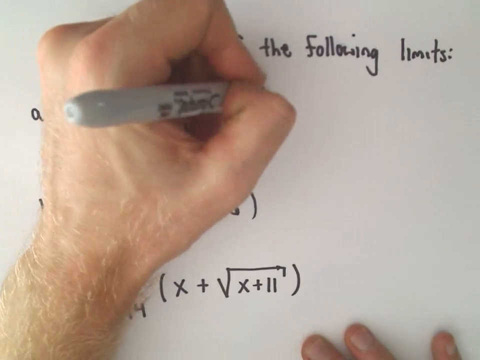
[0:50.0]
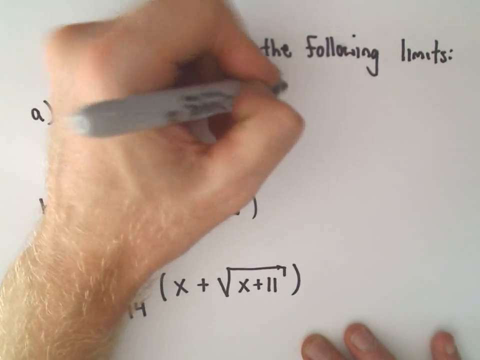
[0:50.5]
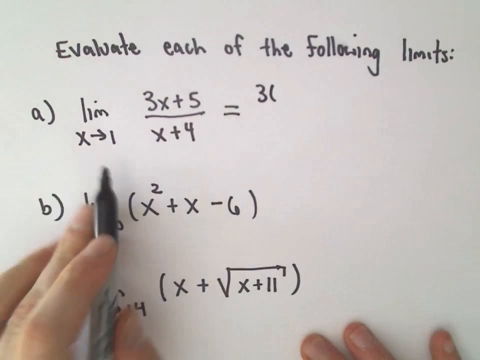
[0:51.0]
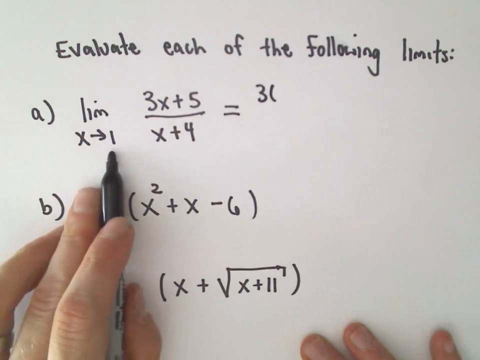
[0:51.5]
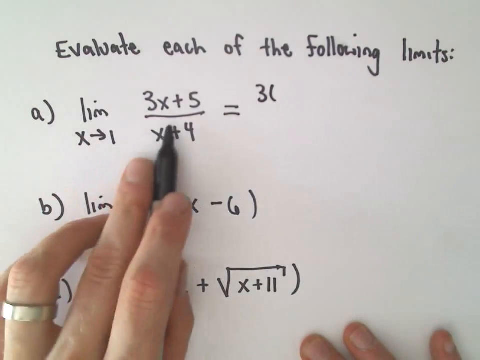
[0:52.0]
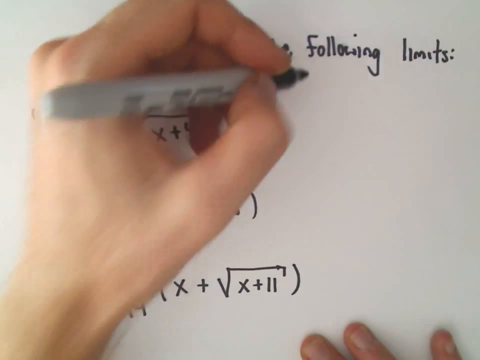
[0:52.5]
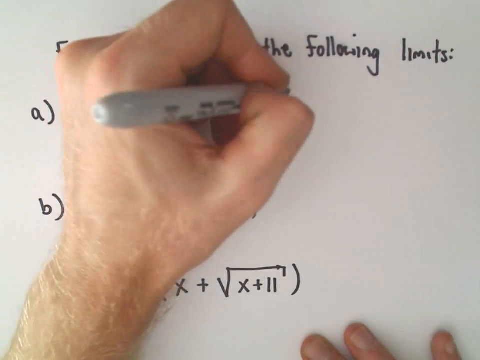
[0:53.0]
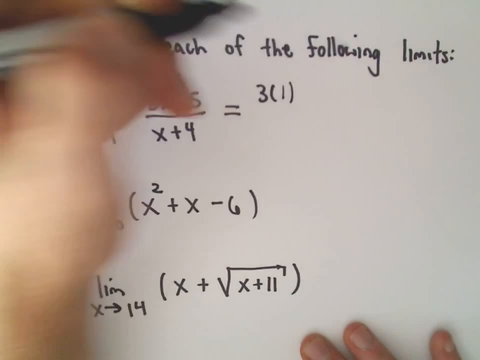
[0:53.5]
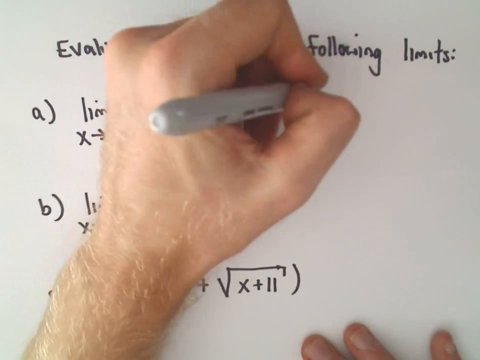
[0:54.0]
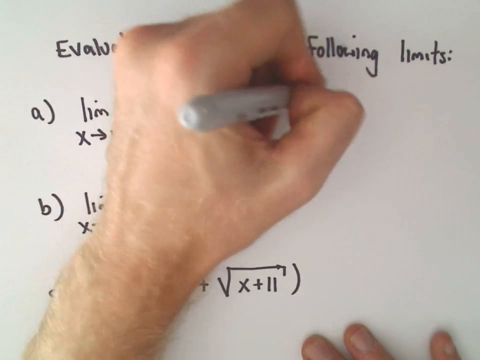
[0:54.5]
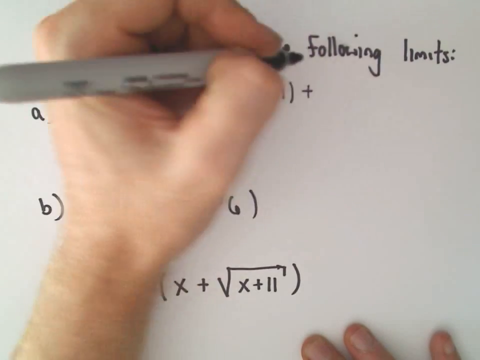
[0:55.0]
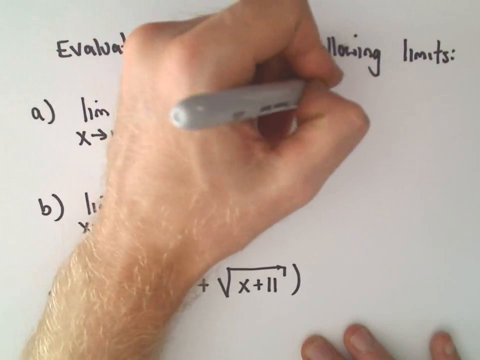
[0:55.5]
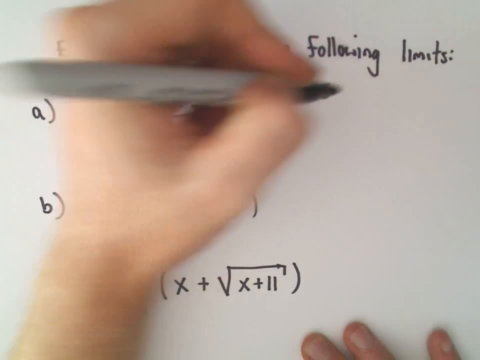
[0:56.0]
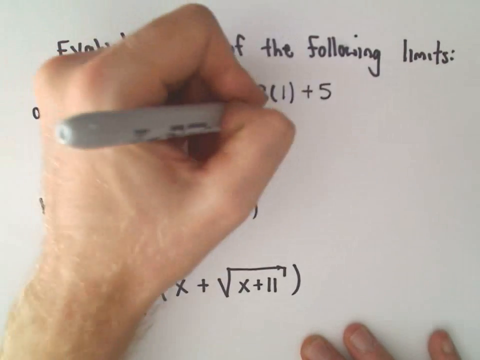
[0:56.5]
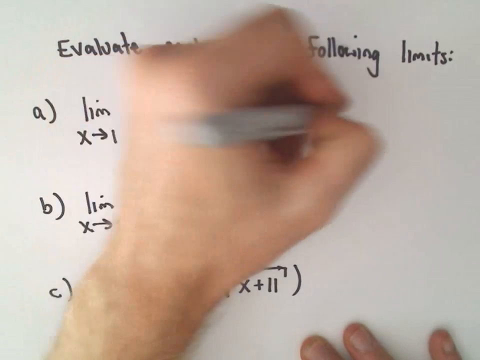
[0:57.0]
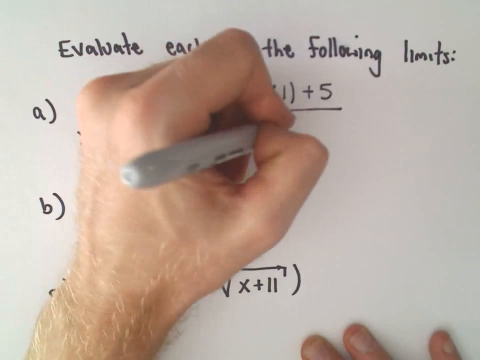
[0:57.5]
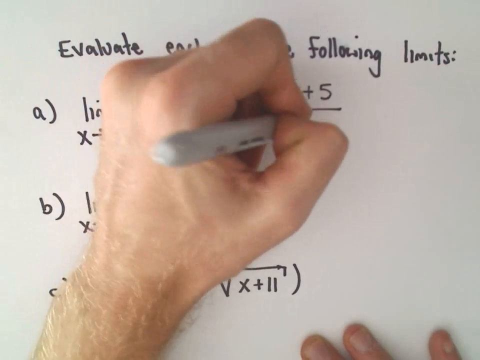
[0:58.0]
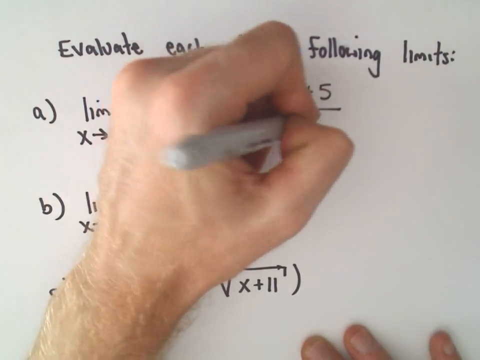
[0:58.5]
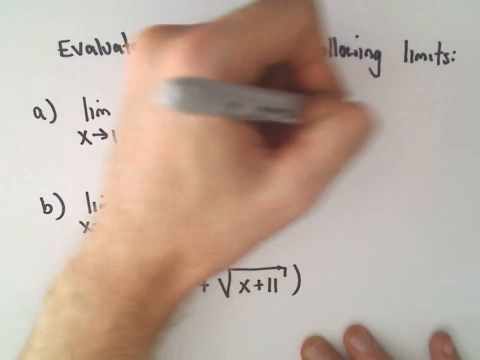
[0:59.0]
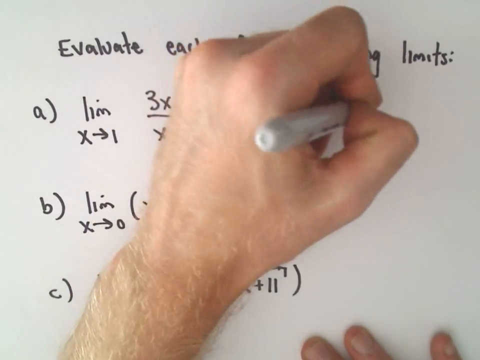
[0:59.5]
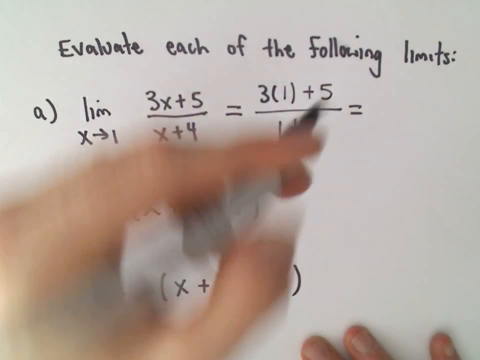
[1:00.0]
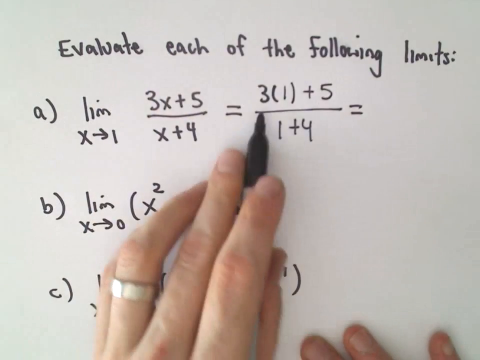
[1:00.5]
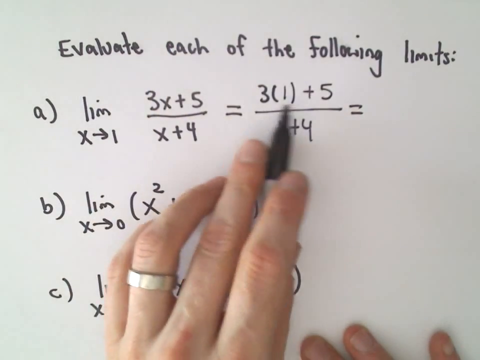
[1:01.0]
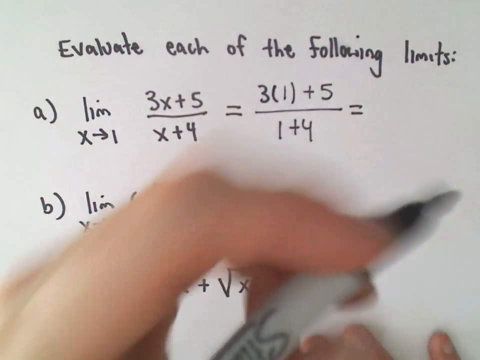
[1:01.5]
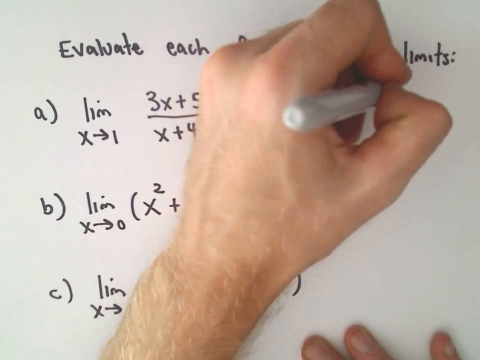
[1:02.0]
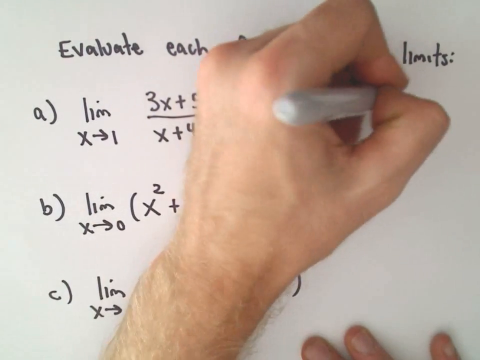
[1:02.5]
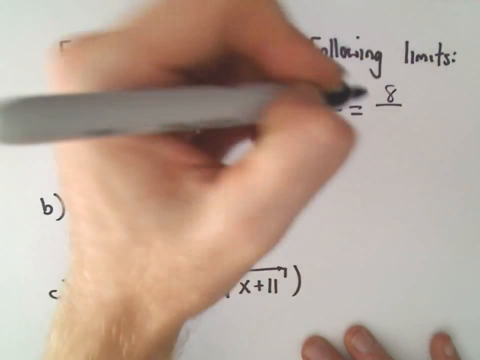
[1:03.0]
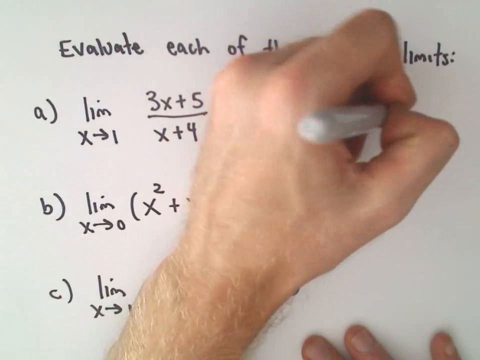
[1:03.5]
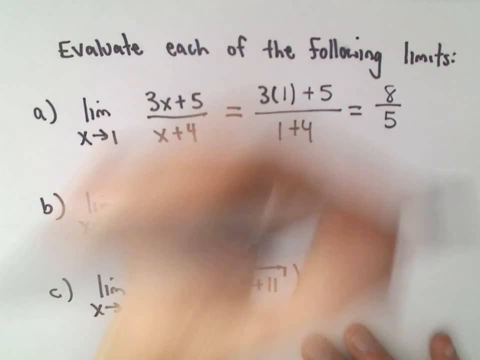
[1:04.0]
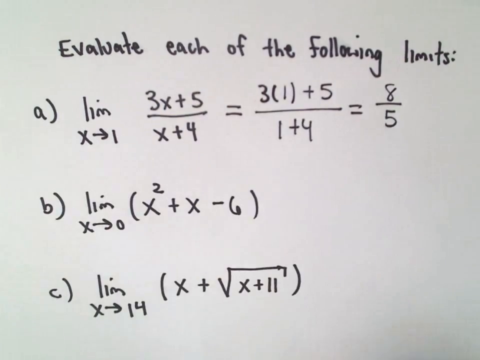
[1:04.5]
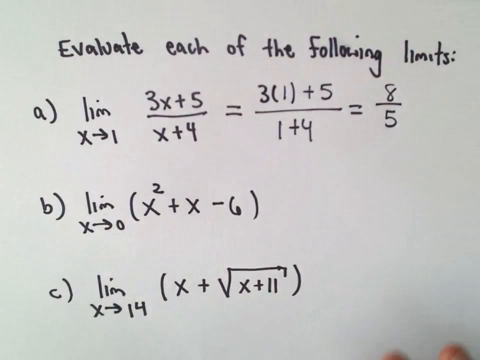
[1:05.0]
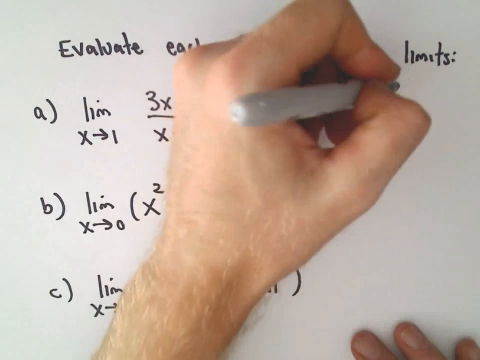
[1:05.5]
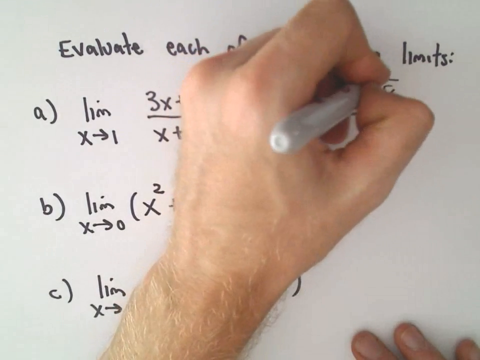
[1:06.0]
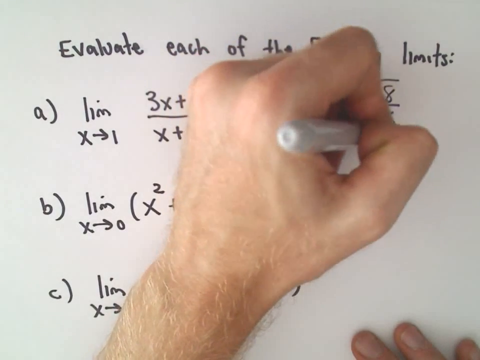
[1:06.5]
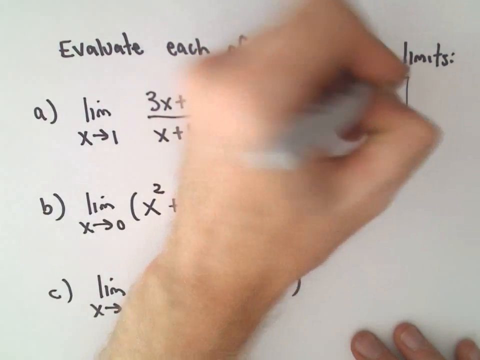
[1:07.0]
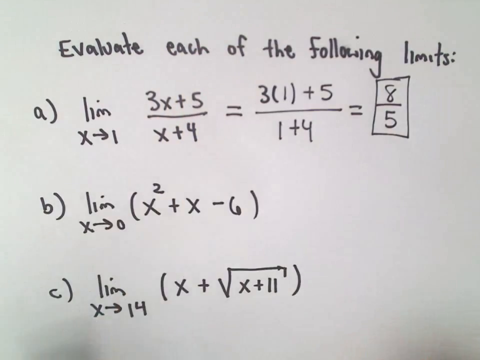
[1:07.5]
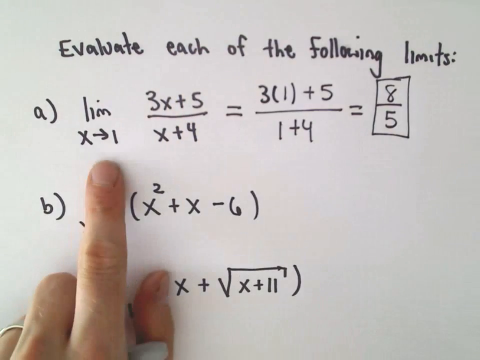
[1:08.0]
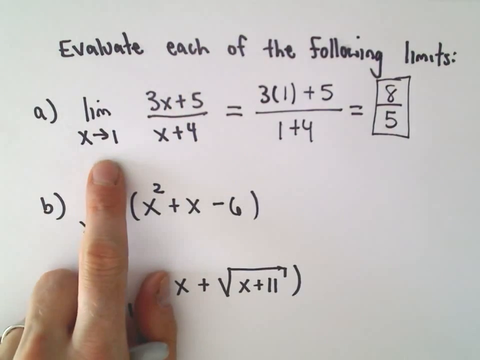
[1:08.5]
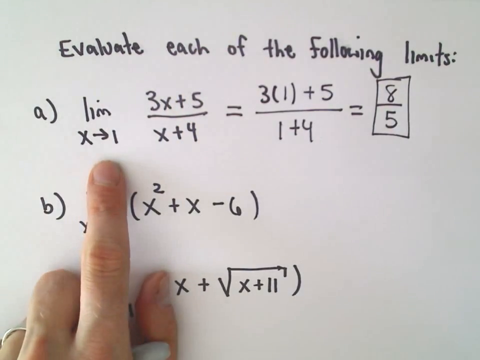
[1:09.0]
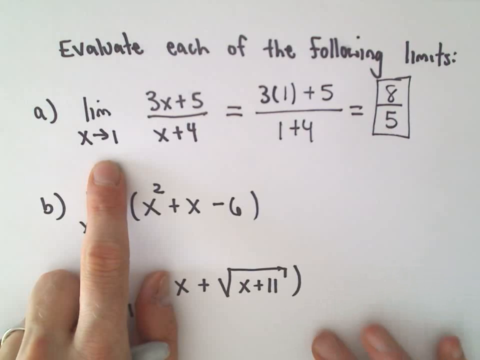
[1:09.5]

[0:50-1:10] The hand of a Caucasian man holds the sharpie as he writes the equal sign and then the rest of the solution, his hand and wrist slightly blocking the view; the hair on his wrist is blonde. He briefly moves his hand away, revealing that it says 3 times 1 plus 5 over 1 plus 4 equals 8/5. He draws a square box around the 8/5. The sharpie then leaves the frame, and he points with his index finger to each component of the equation. The equations below that still need to be solved are also visible. The camera remains semi-steady, and it appears to be some sort of instructional video on how to solve math problems.